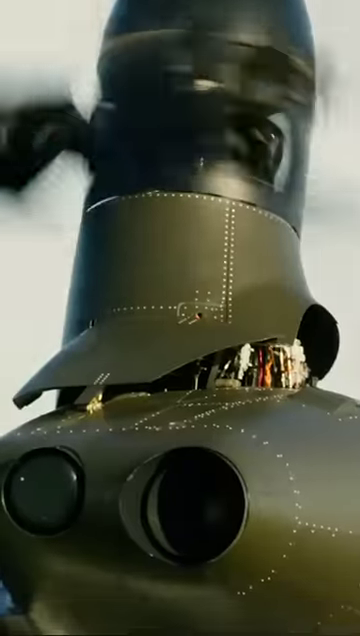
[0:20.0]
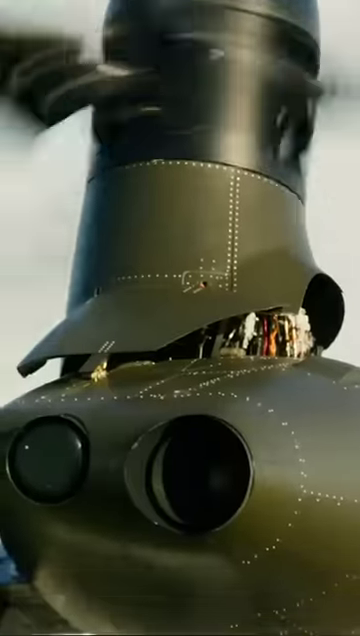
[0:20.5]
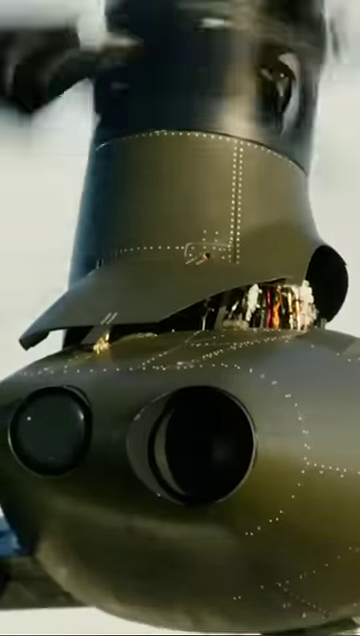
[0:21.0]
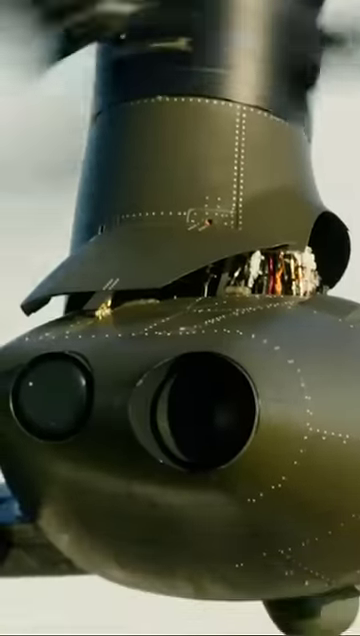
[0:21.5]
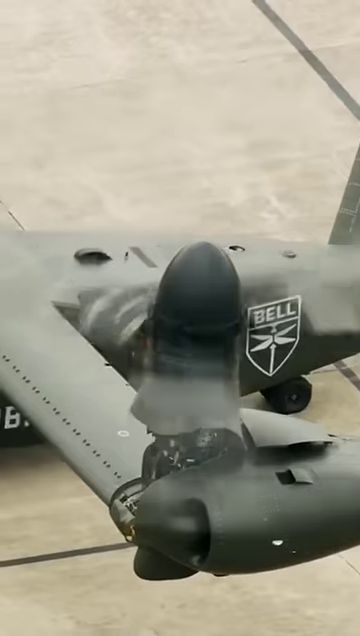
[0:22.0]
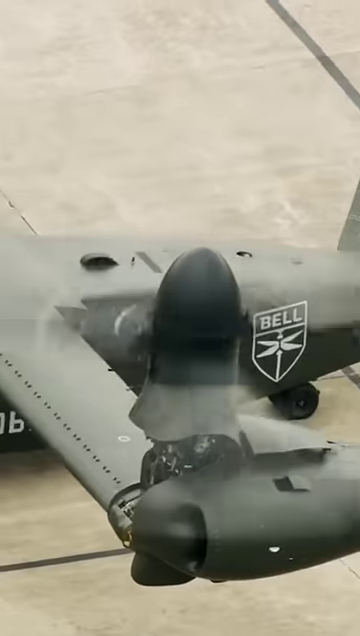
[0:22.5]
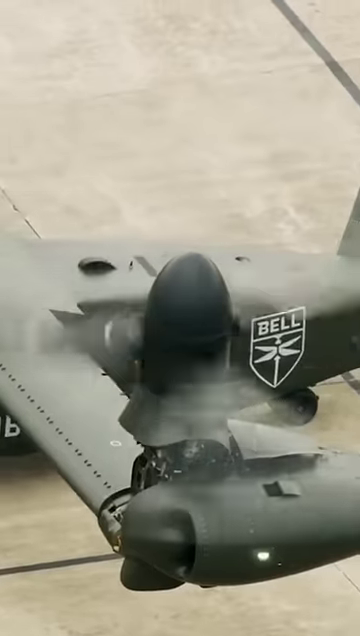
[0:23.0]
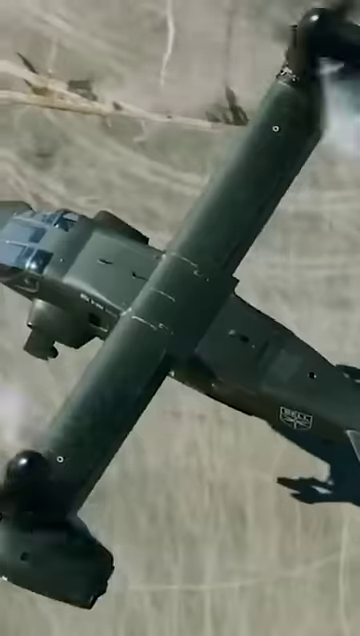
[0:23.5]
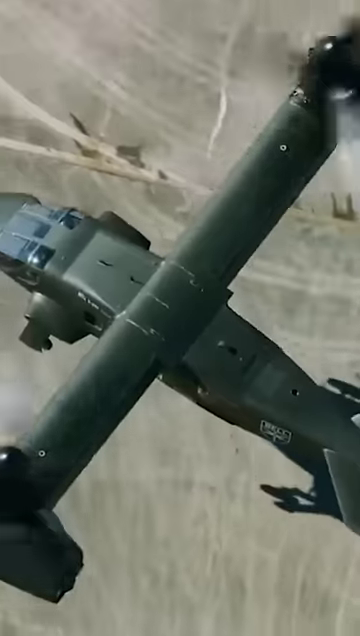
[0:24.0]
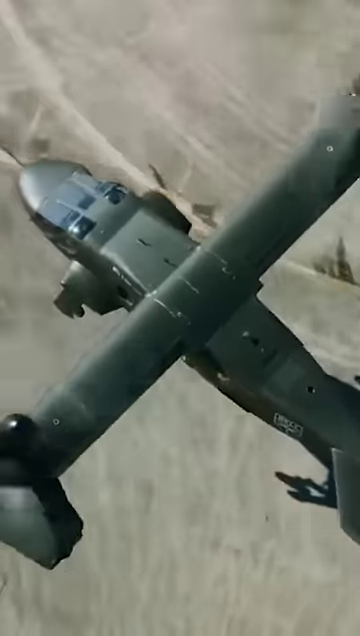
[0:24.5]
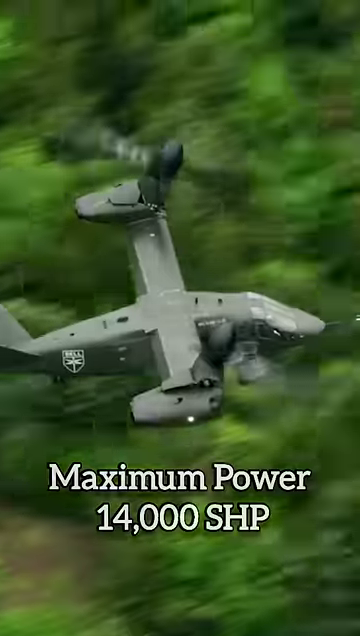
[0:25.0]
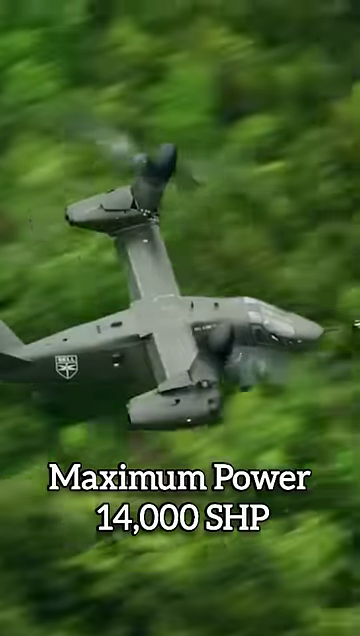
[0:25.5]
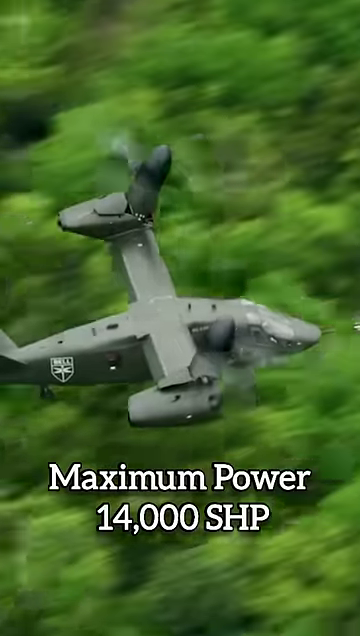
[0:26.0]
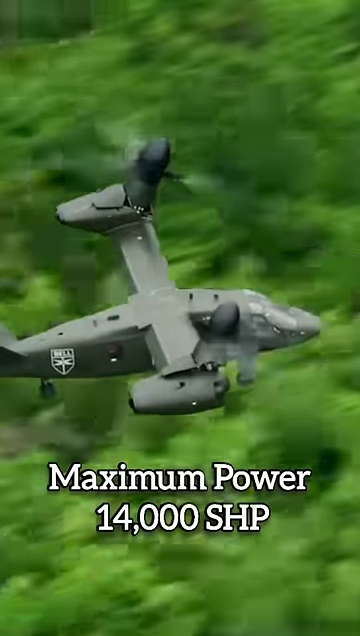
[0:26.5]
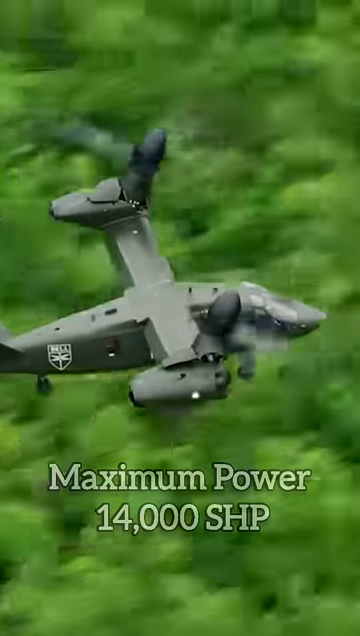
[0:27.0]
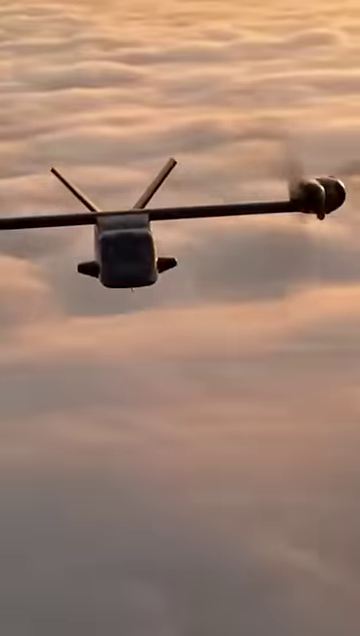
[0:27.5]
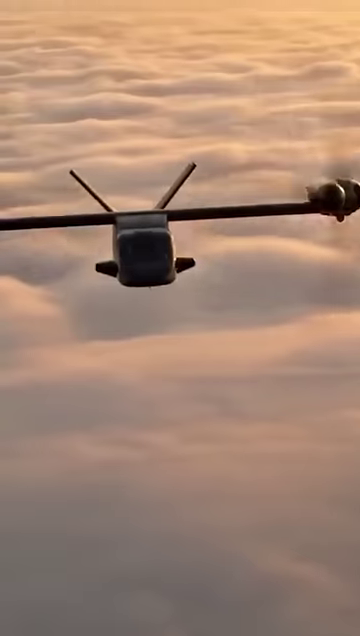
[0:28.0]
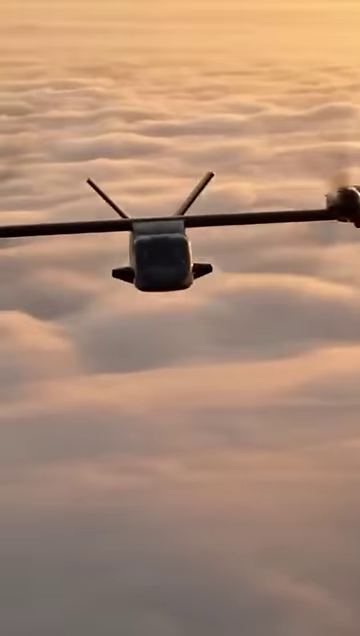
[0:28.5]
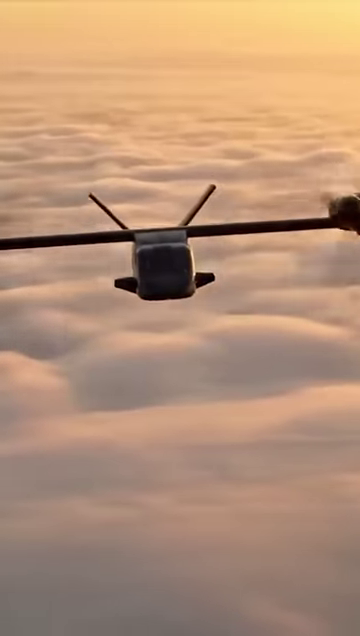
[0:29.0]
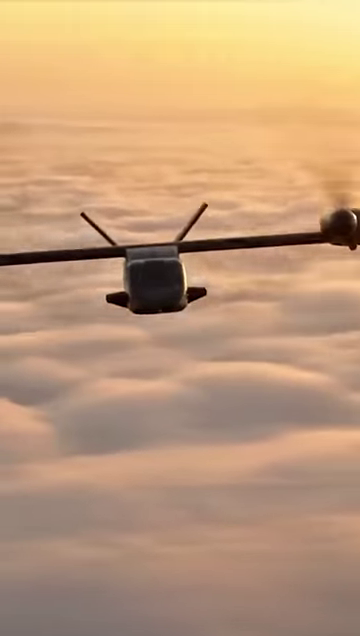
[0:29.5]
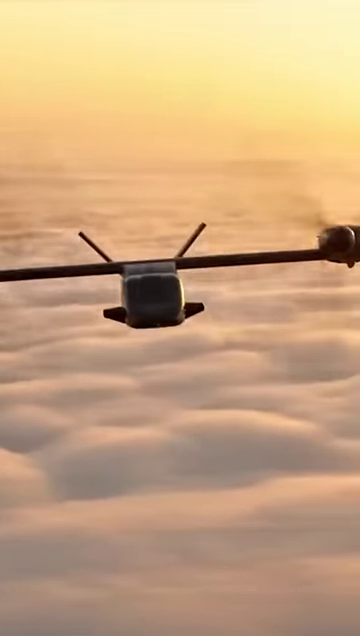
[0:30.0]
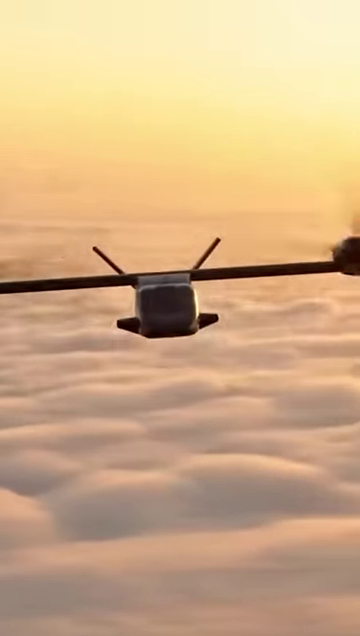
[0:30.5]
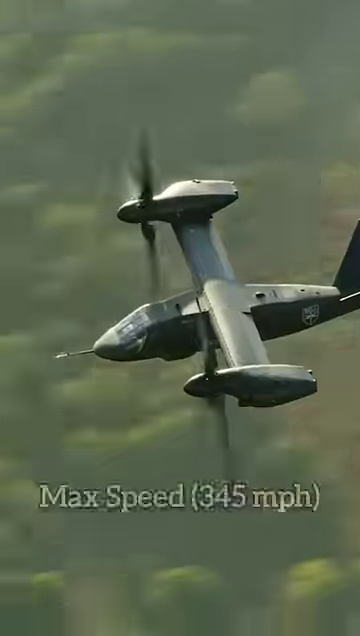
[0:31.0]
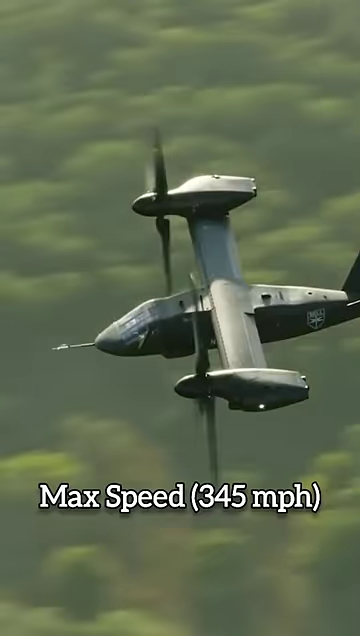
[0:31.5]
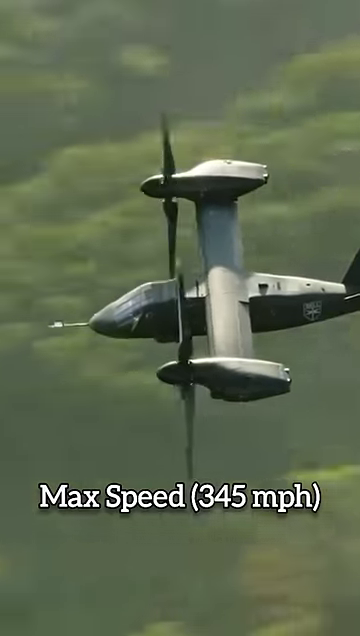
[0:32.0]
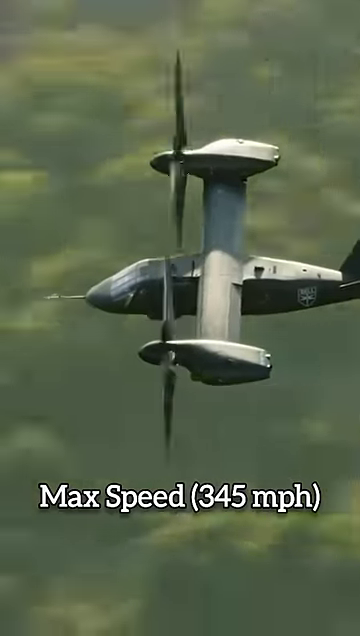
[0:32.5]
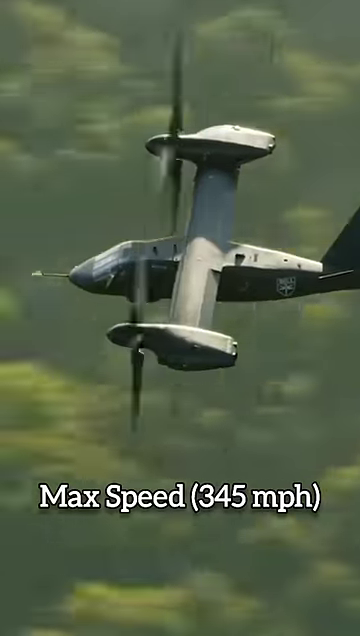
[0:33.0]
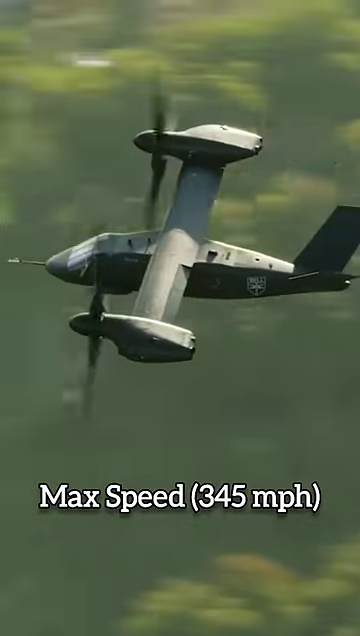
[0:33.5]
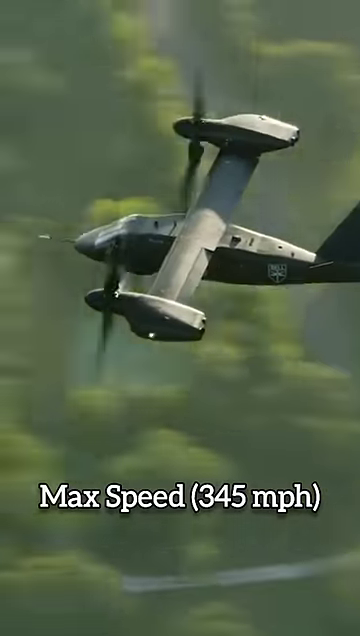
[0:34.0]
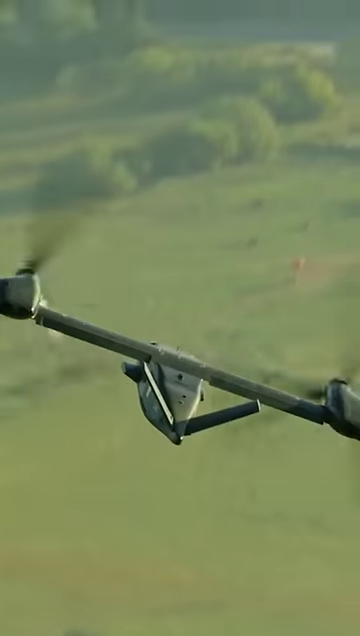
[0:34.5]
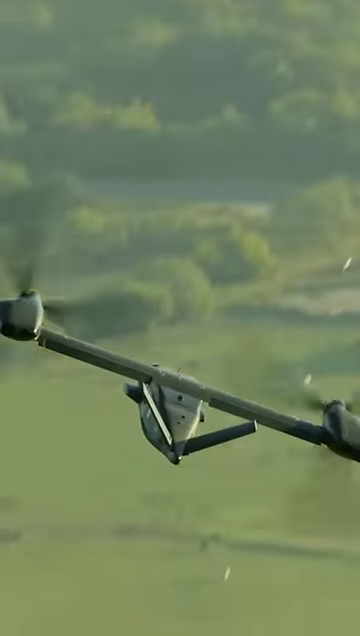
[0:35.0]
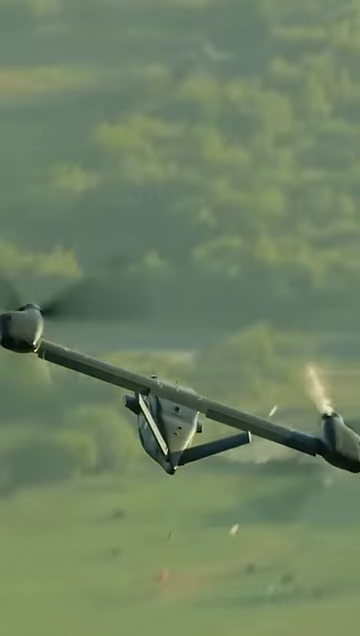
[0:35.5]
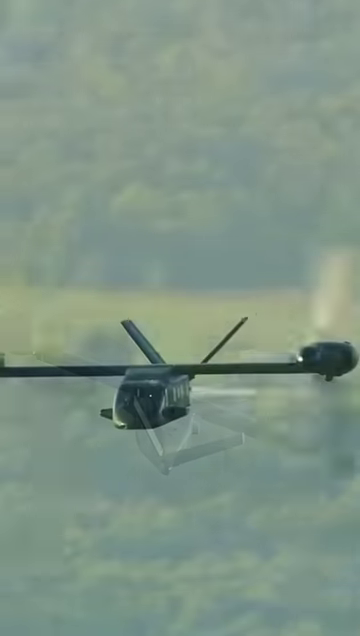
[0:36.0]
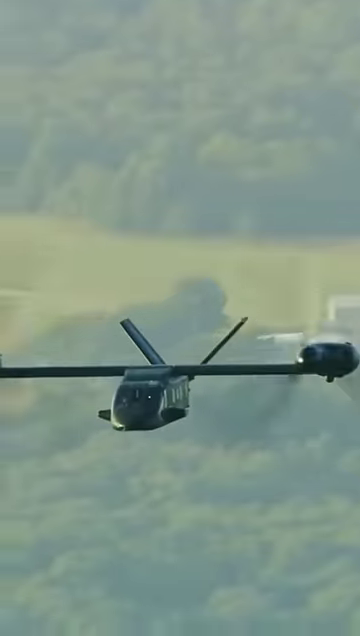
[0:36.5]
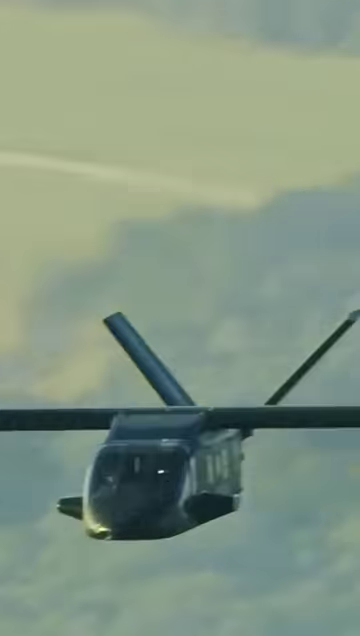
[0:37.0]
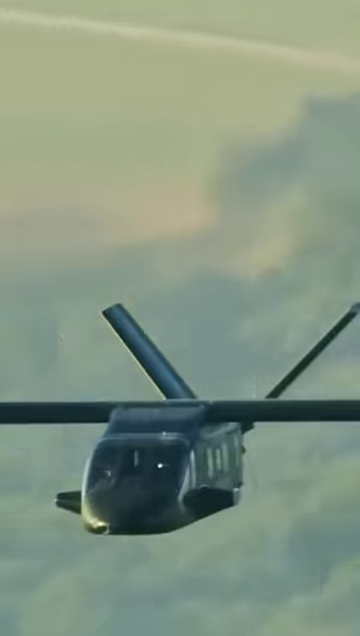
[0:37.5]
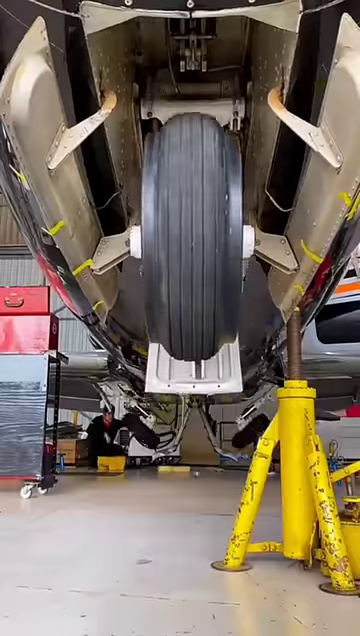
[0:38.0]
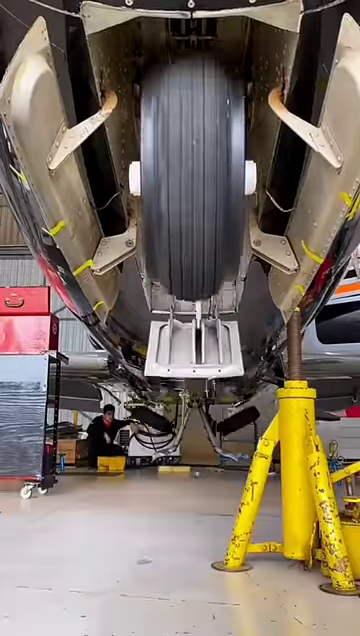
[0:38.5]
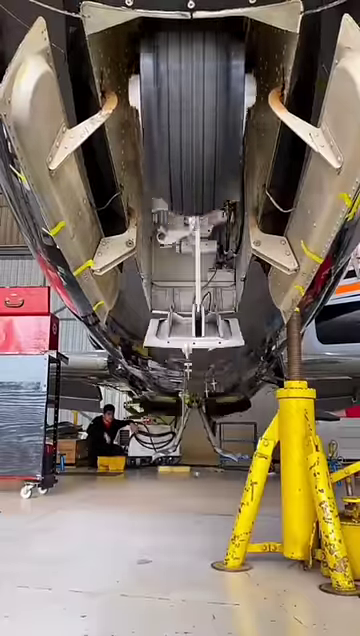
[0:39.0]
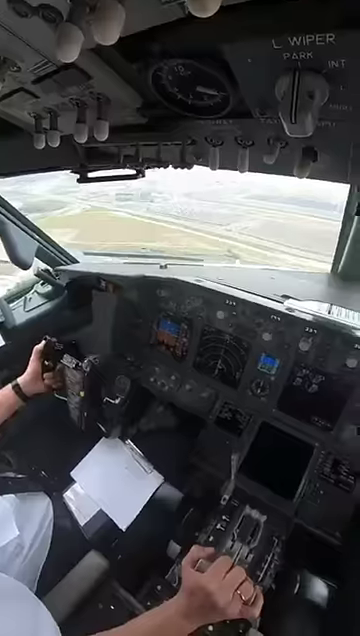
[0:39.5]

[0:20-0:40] The aircraft, a kind of combination between airplane and helicopter, flies through the air and is shown from different angles, including inside the cockpit and underneath, looking at the wheel wells. Text on the screen gives the maximum flying speed and horsepower, apparently technical details. The aircraft is also seen on the ground with the wheels docking, and it flies through various terrains and backgrounds.